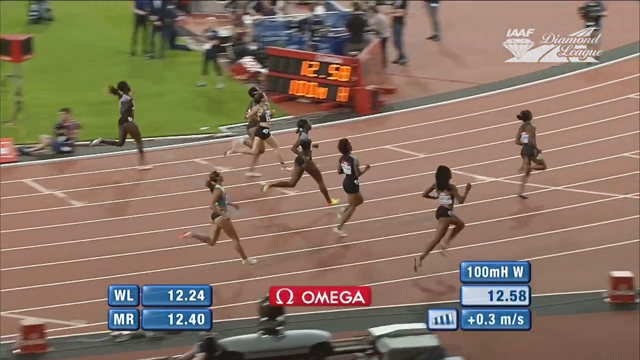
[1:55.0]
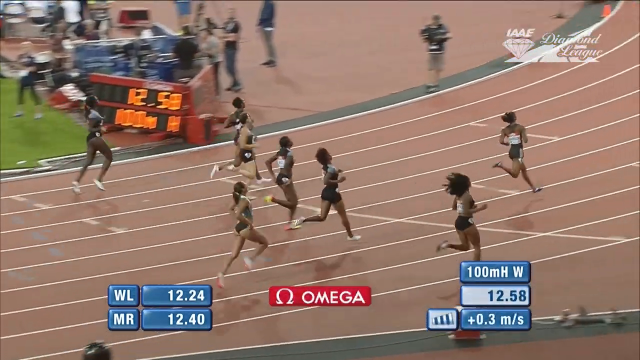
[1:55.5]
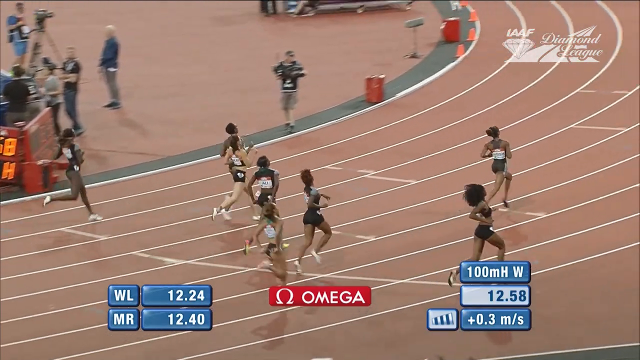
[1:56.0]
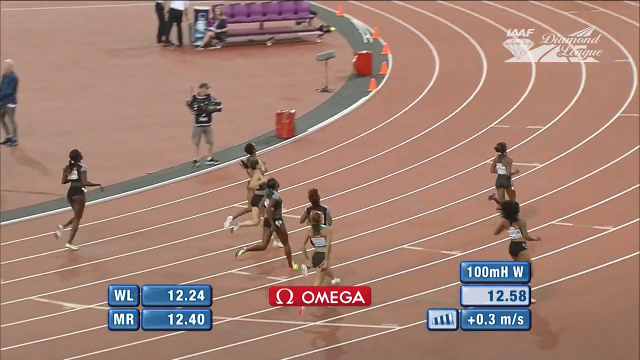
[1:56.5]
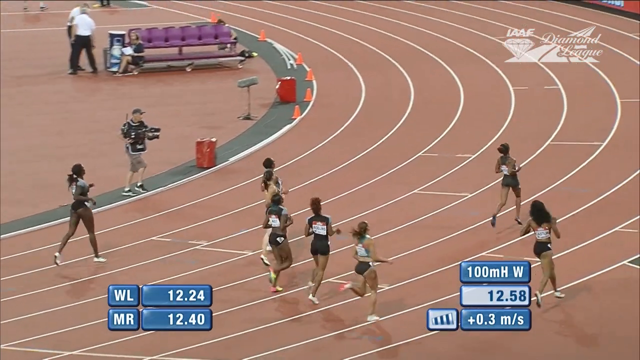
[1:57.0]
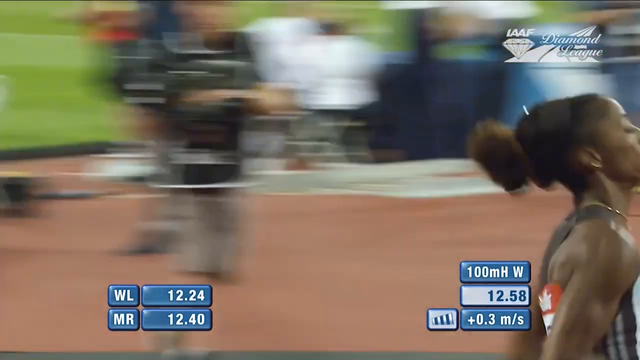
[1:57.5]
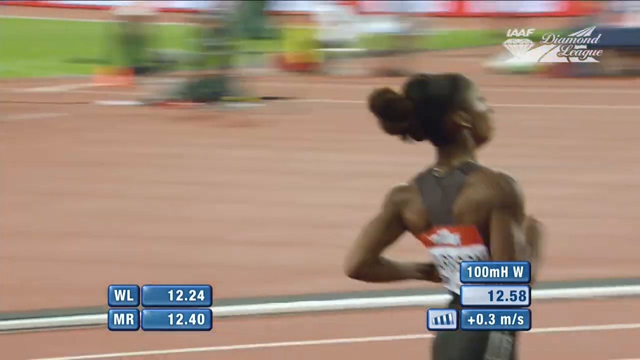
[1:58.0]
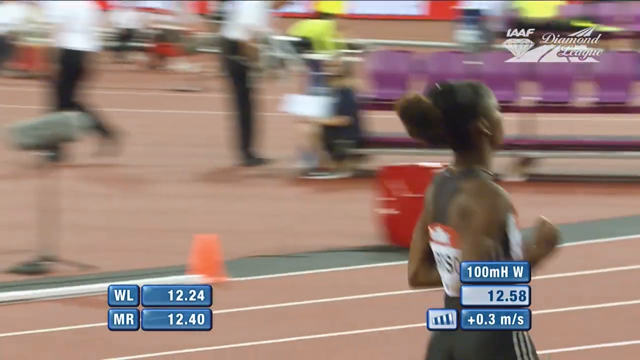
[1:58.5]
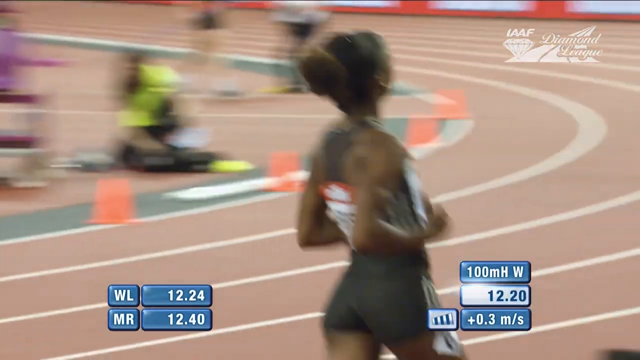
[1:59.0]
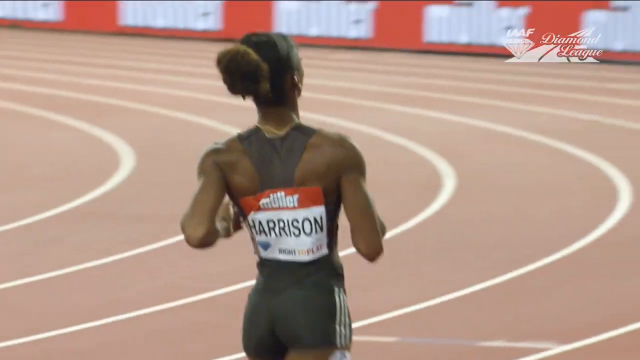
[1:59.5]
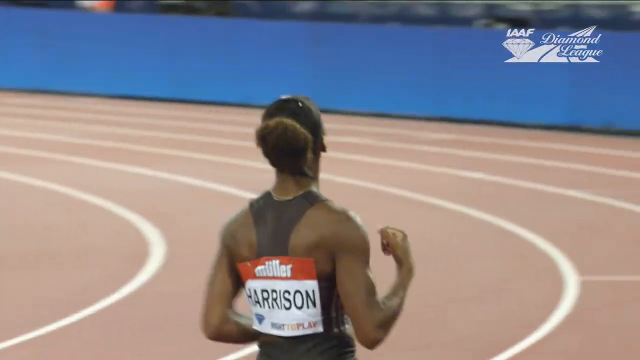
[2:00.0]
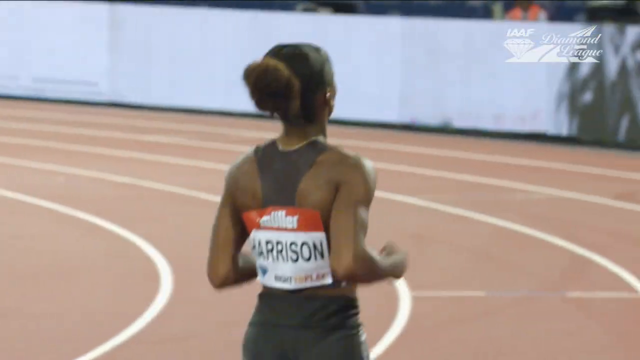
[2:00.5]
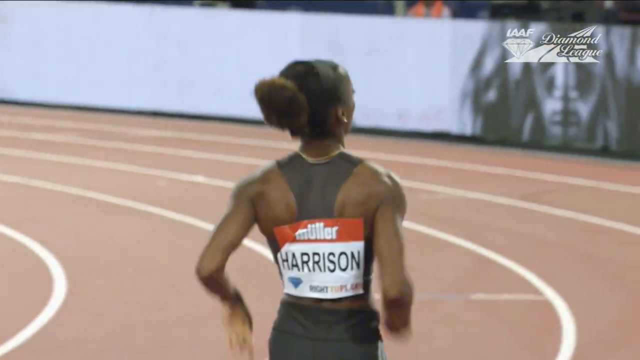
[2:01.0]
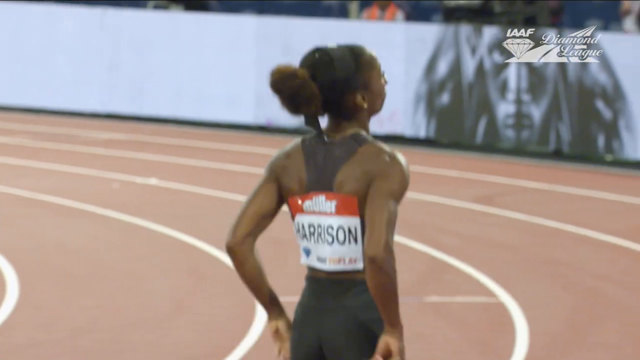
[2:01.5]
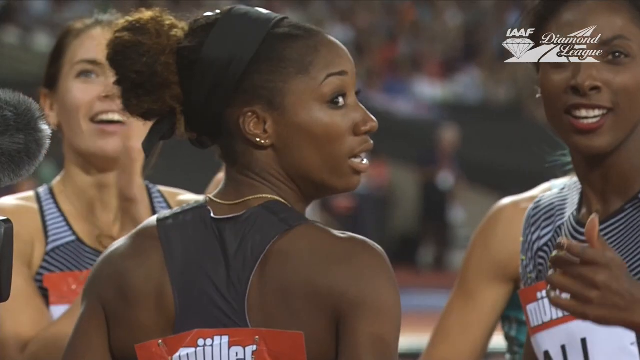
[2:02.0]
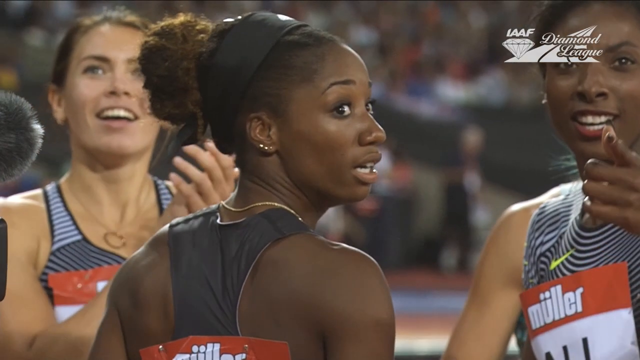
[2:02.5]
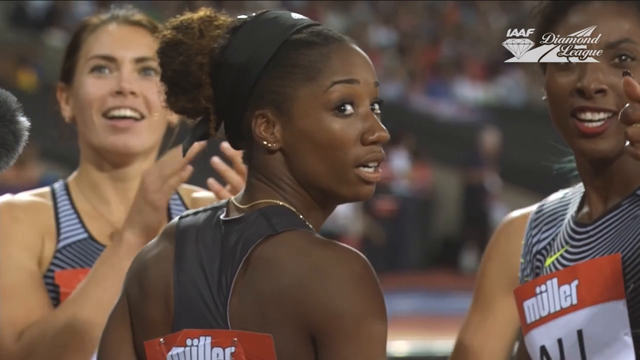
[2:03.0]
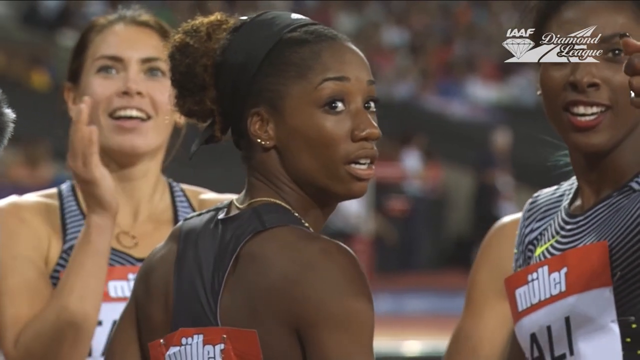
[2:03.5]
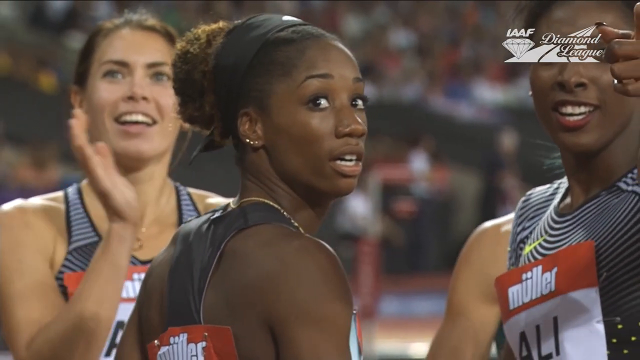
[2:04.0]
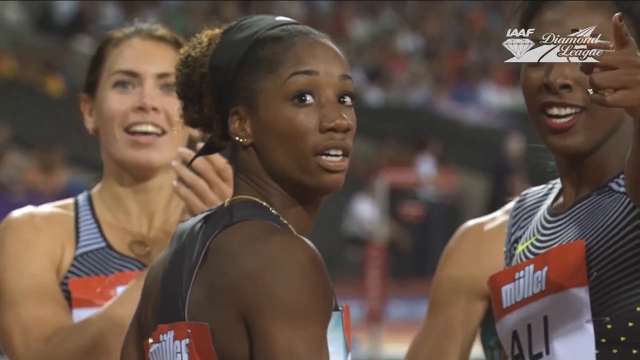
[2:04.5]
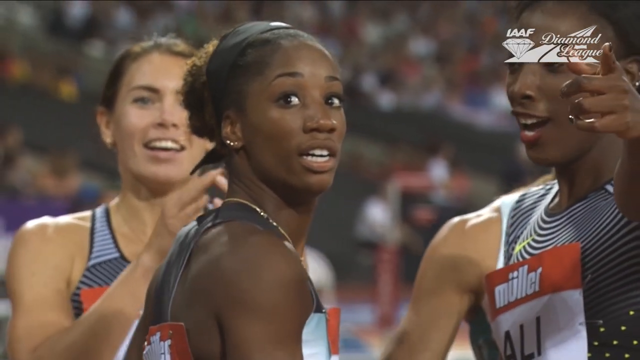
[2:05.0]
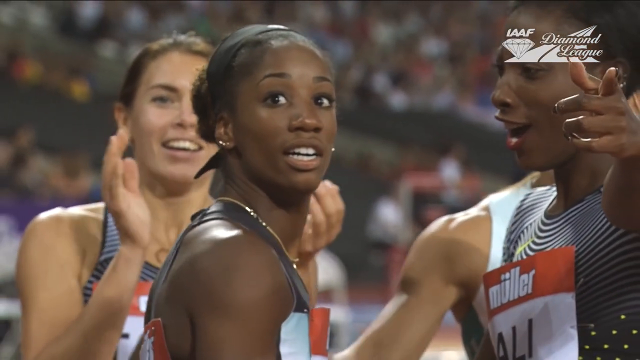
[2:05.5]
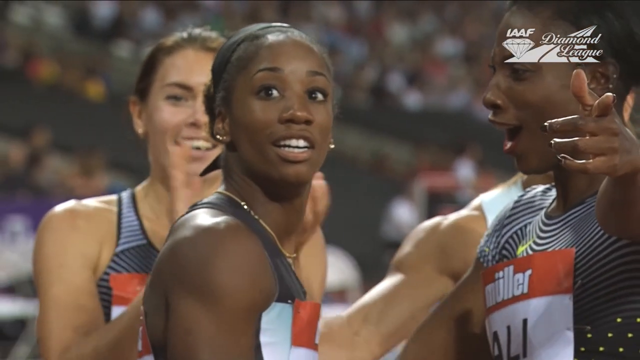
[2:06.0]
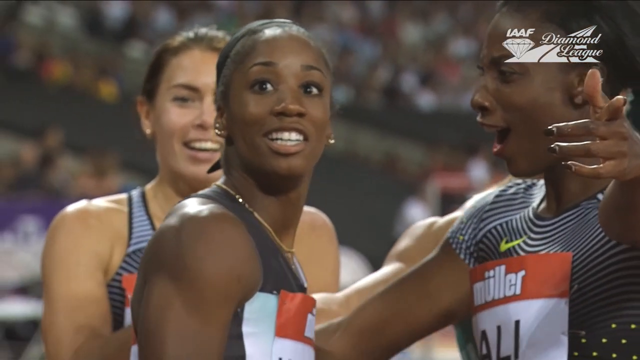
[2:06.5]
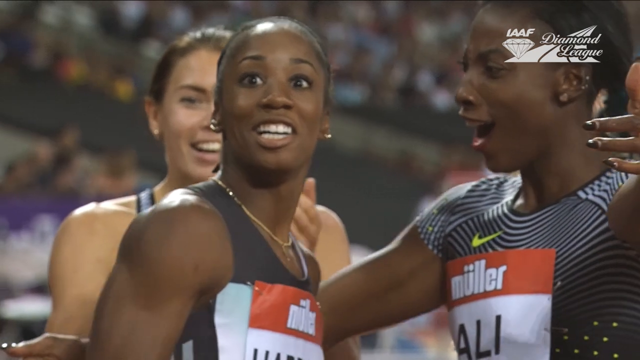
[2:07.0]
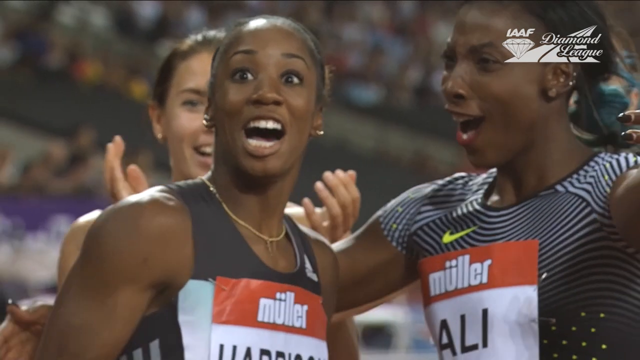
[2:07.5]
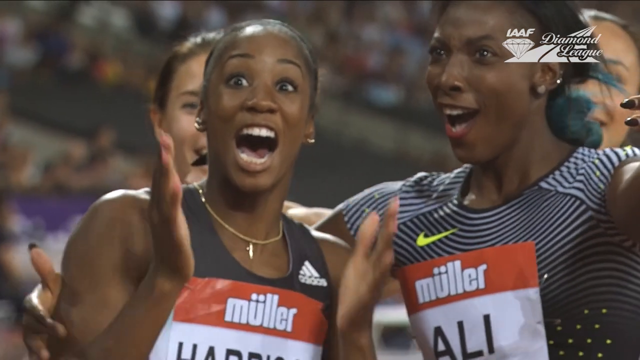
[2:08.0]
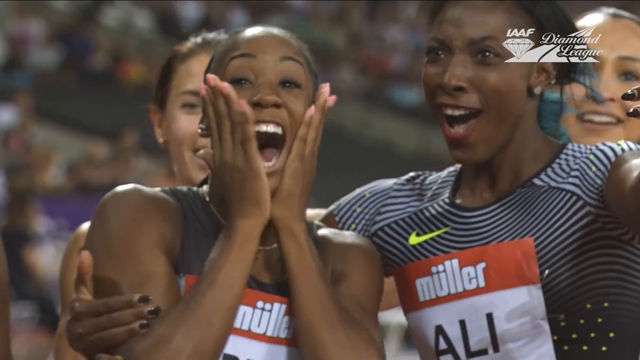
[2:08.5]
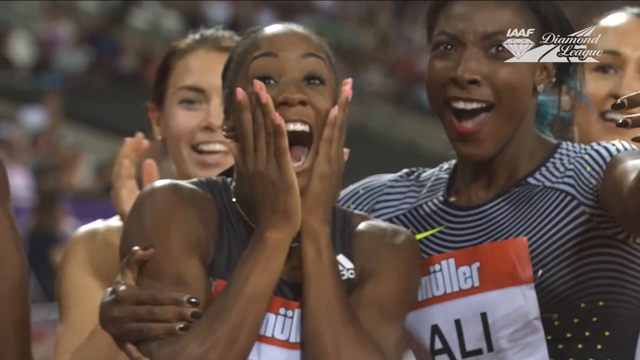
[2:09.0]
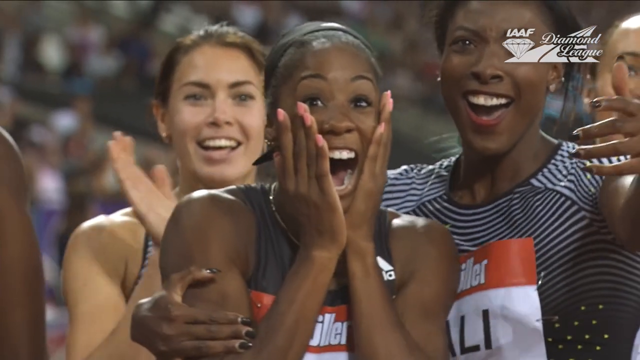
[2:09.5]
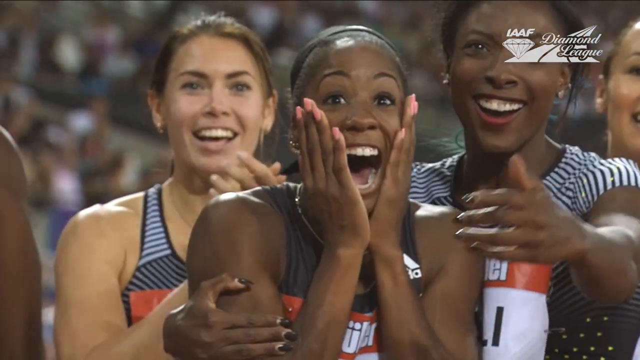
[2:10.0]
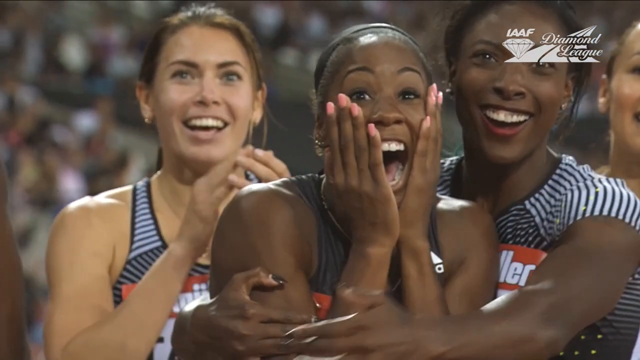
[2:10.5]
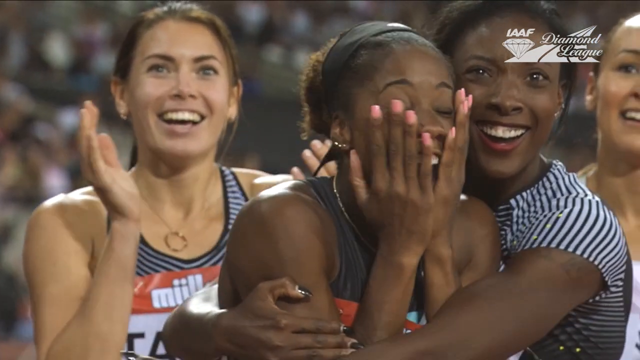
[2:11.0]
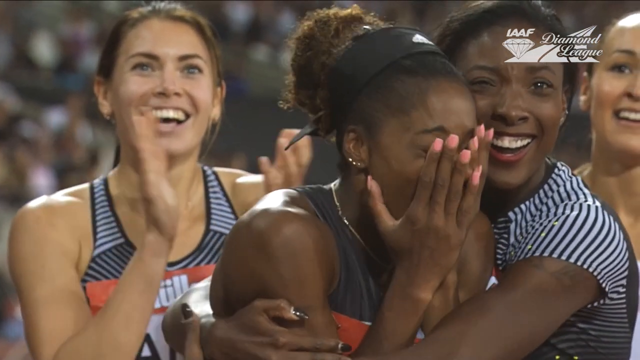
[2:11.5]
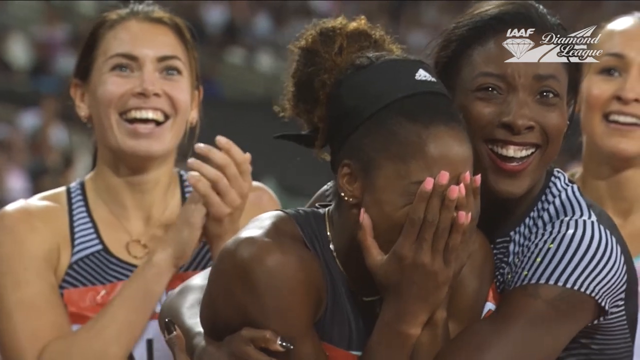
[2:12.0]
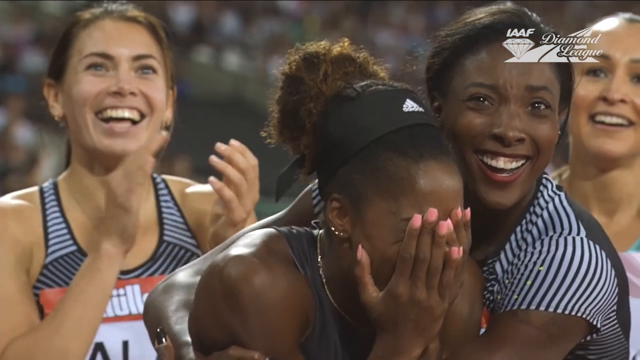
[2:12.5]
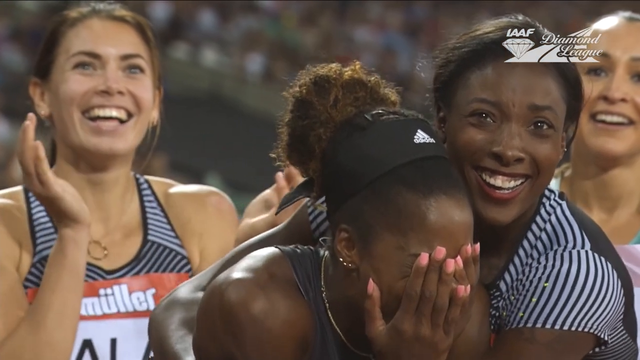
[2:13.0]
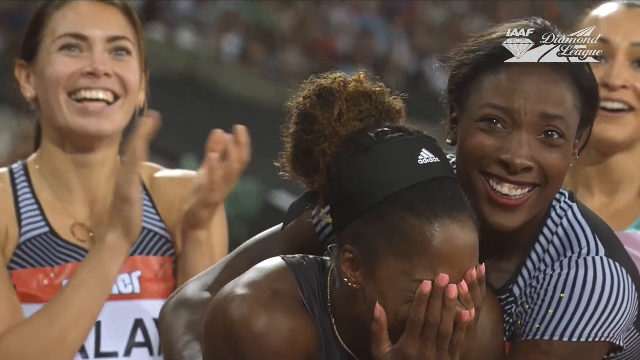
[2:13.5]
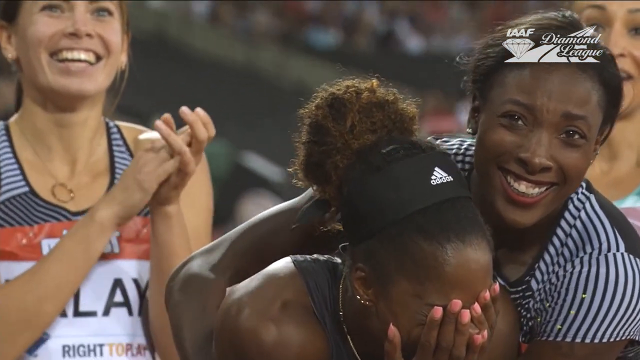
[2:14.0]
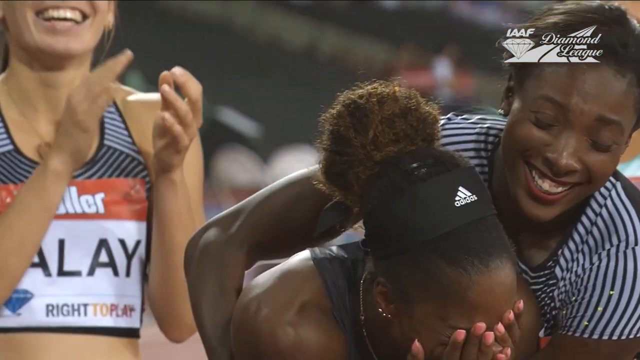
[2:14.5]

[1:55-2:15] The runners finish the event, and the winner is shown visibly excited and emotional; her last name is Harrison, she represents the United States, and her official time is displayed. The graphic in the top right reads "IAAF Diamond League". The coverage continues into the post-race celebrations, with all the fellow competitors congratulating, clapping and celebrating with the winning runner.